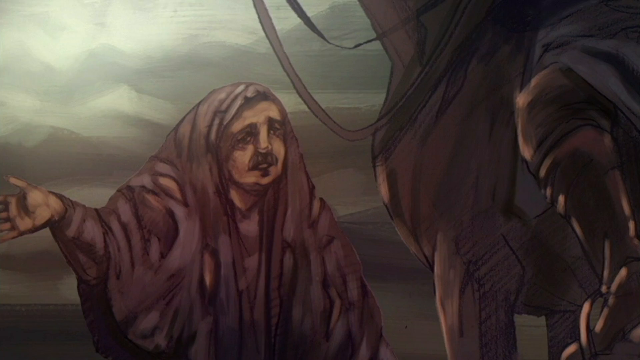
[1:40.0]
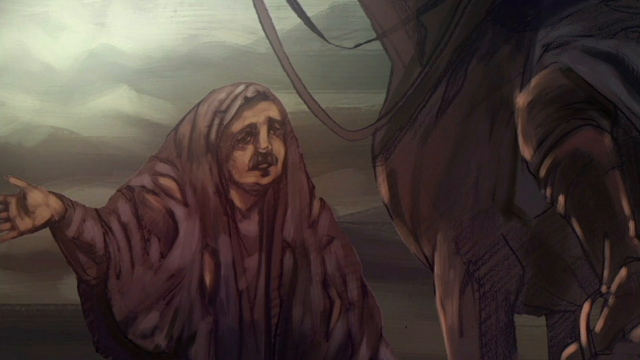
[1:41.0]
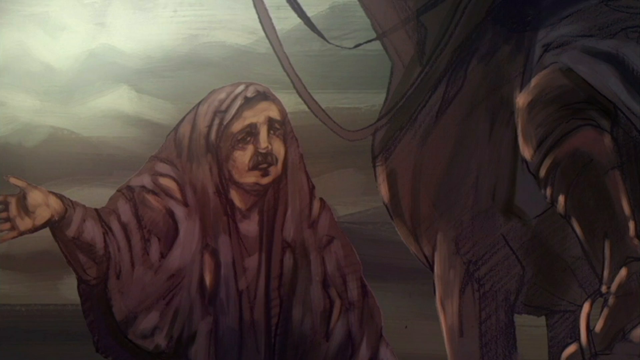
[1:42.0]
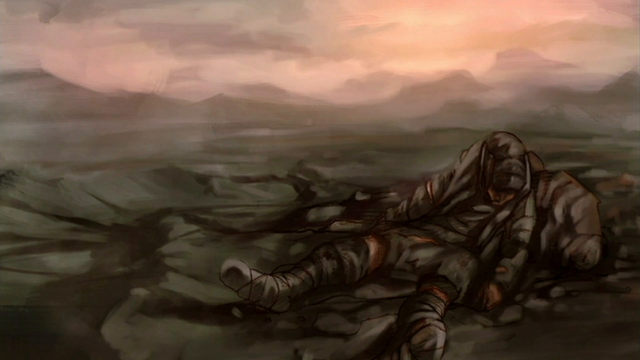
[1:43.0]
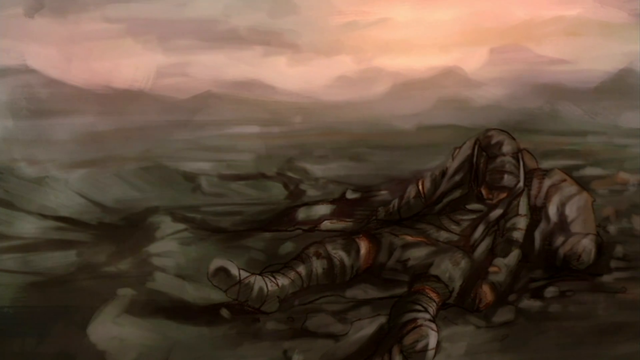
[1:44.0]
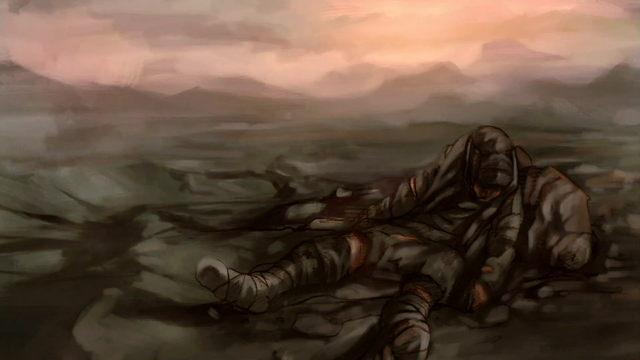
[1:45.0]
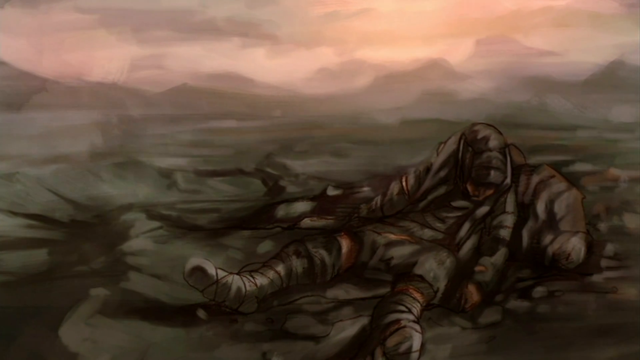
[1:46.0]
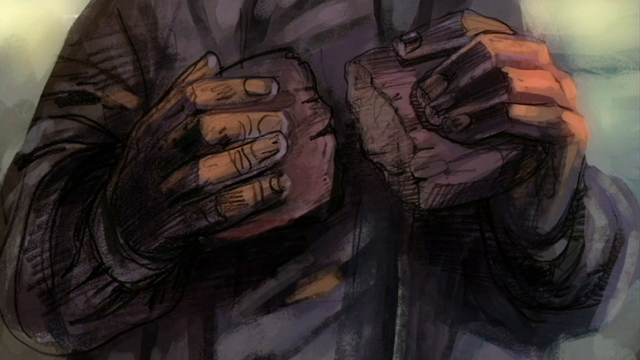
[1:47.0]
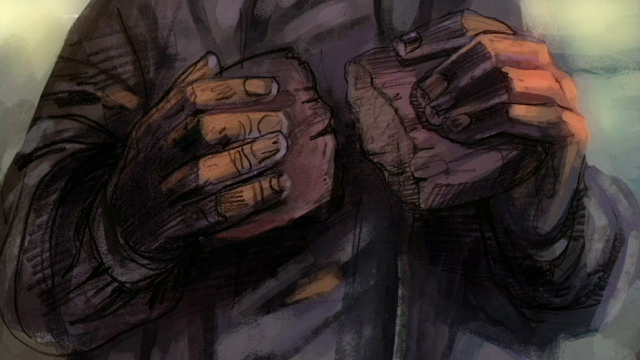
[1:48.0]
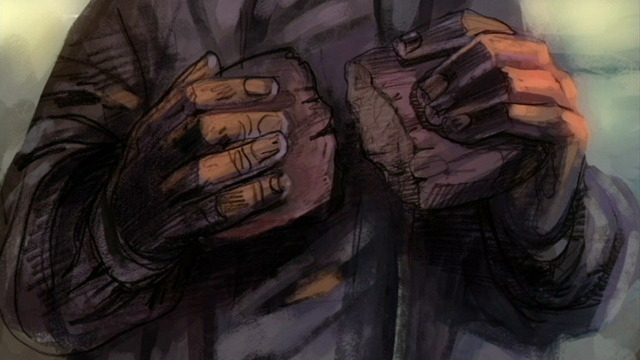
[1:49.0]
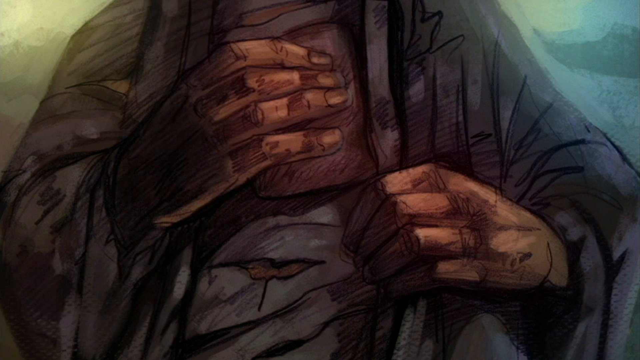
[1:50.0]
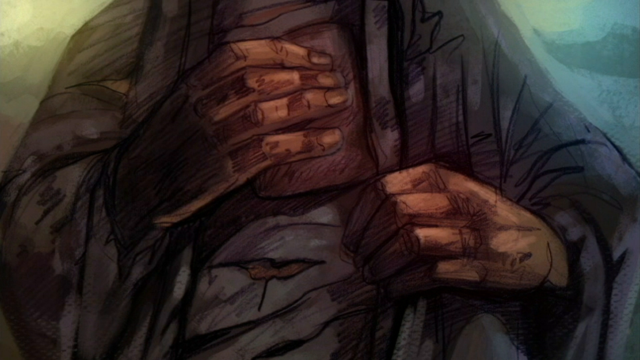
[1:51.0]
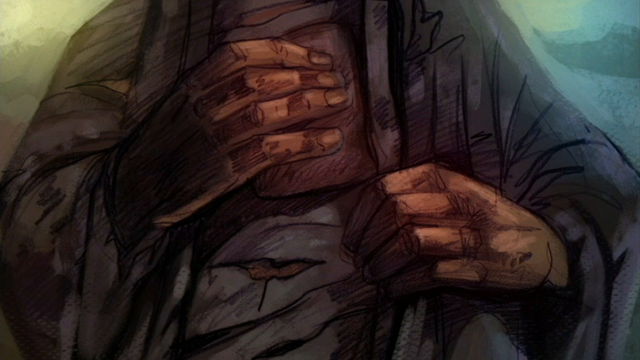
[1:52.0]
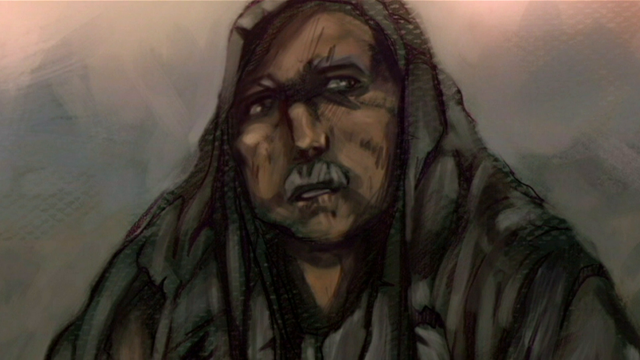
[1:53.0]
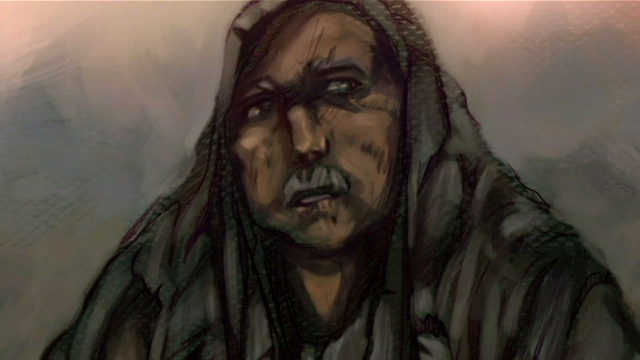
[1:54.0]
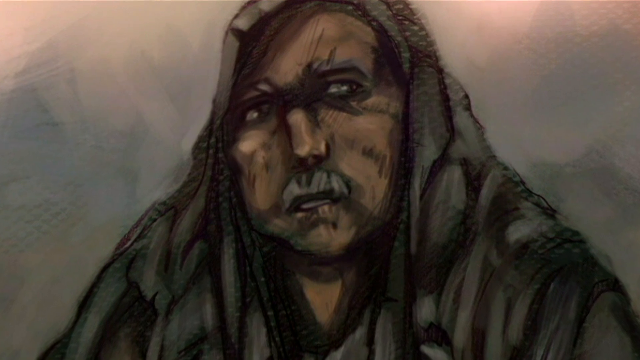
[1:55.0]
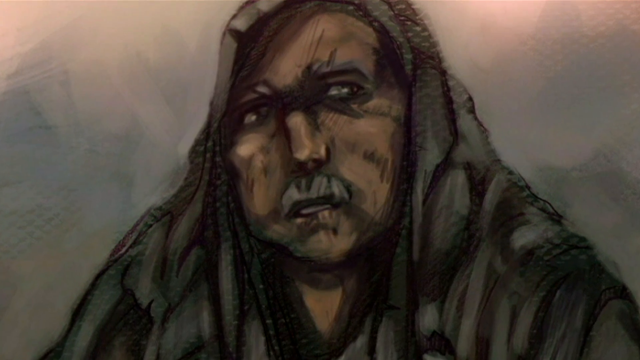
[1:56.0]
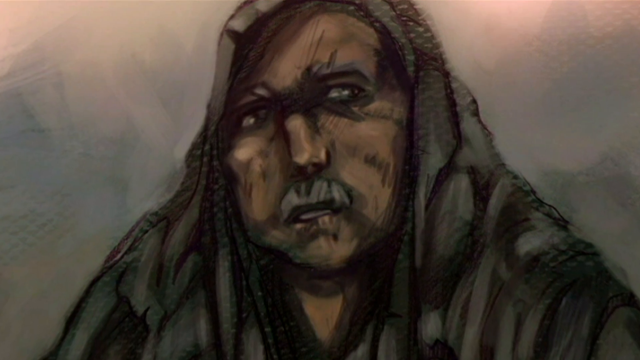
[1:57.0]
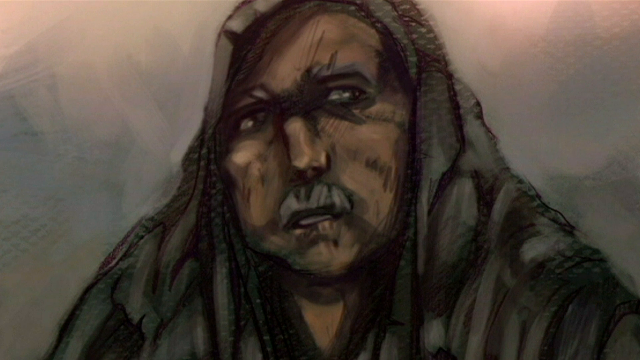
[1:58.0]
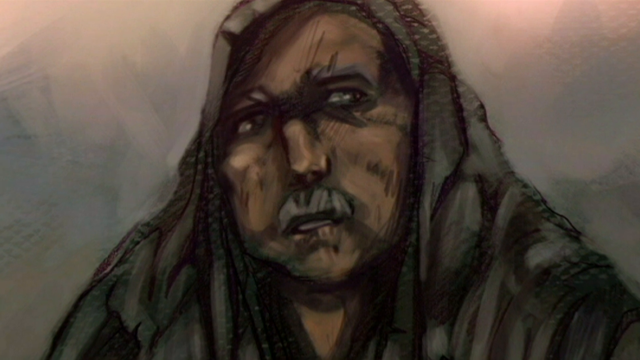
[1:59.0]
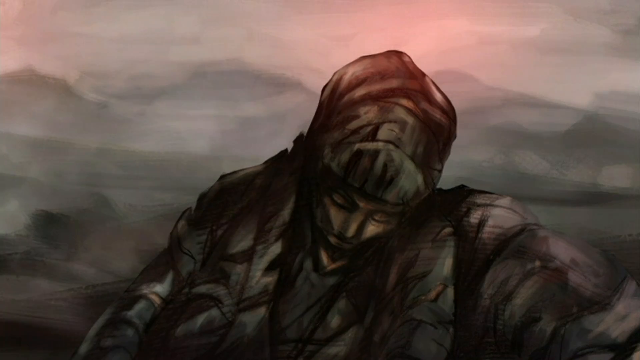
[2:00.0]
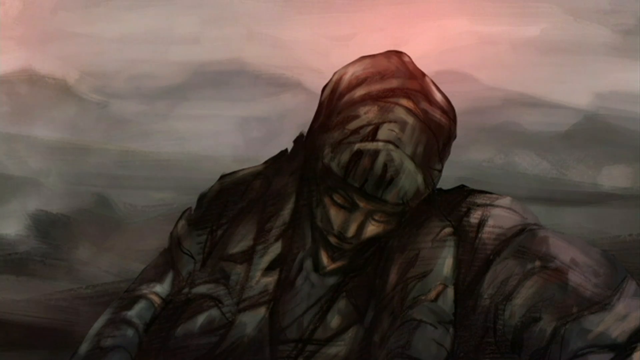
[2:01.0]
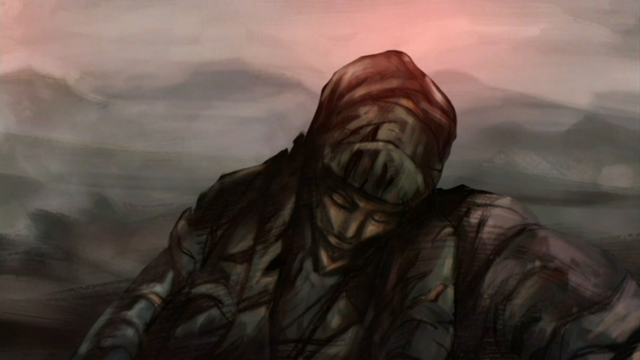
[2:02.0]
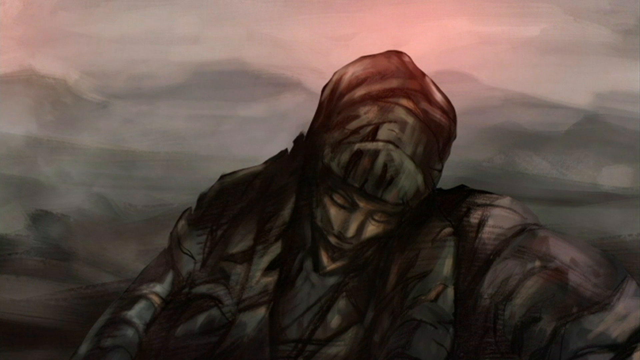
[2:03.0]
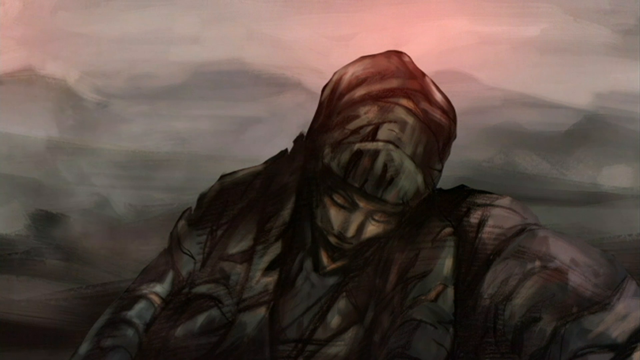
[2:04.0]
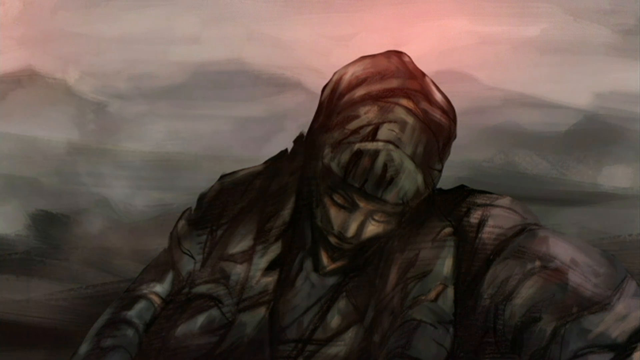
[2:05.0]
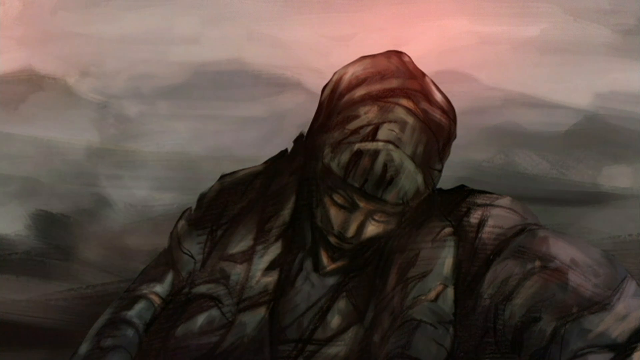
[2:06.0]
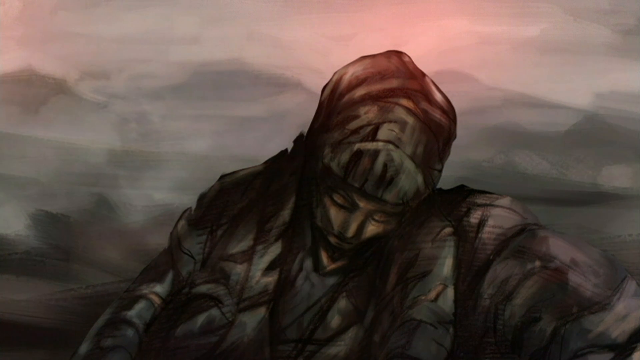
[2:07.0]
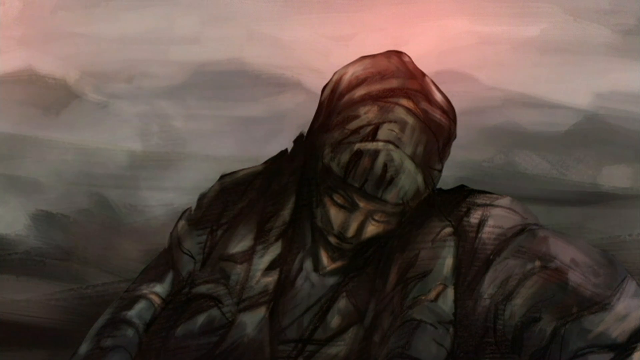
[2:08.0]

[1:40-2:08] Another person lies toward the bottom with one leg out to the left, apparently with white wrap around their legs. It is a charcoal drawing, so it is not very detailed. The person looks like they are slumped against a rock, head leaning forward, arms out to the side, with clouds in the background and what looks like a foggy smog moving across. Then two hands hold a big rock broken in half, one piece in each hand, fingers toward the camera and thumbs on top, with tattered, torn clothes. The piece in the left hand is then moved up toward the chest, the other piece is no longer in the other hand, and that hand has moved down a little, showing a little more of the tattered clothing. Then there is a close-up of the face of an older man with a mustache, with a greenish tint to the cloak over his head. The view zooms in on him very slowly. Finally there is a close-up of someone slumped over, visible from the chest up, head hanging forward and down.